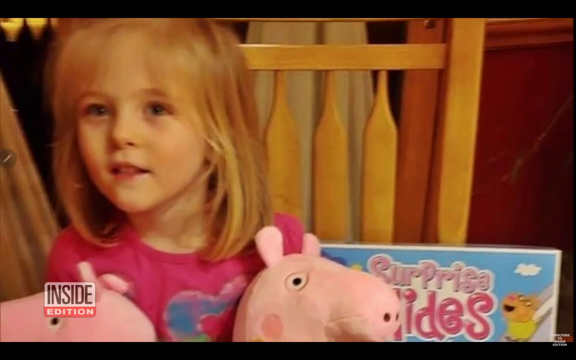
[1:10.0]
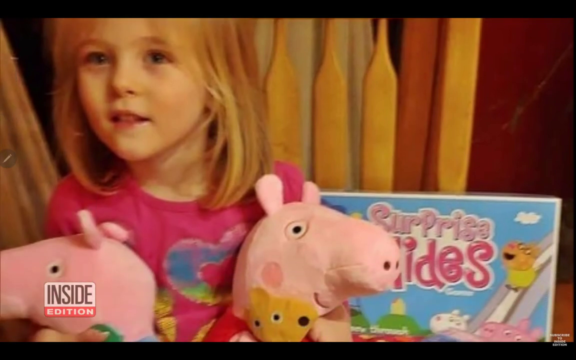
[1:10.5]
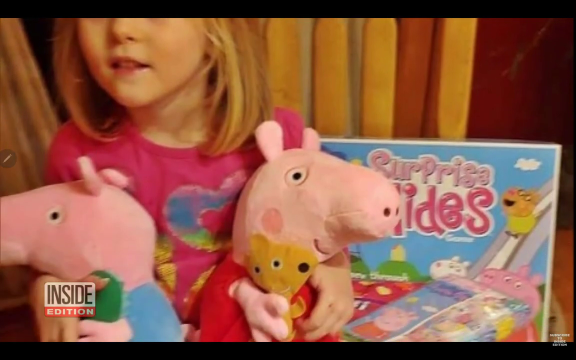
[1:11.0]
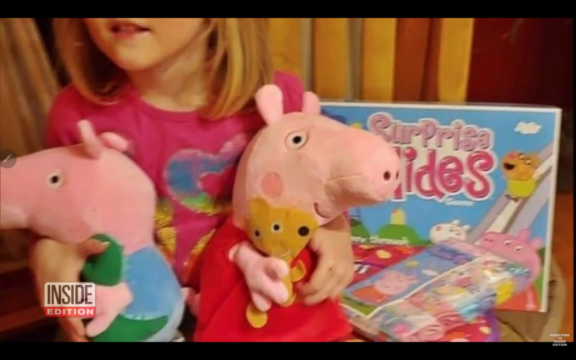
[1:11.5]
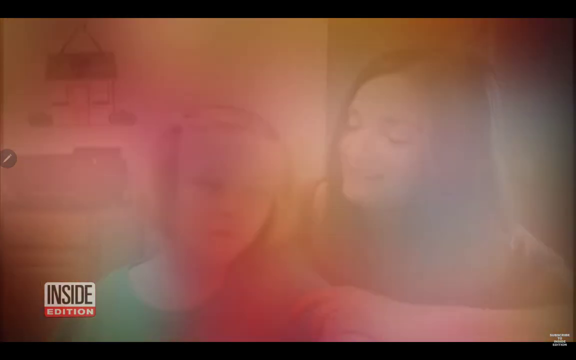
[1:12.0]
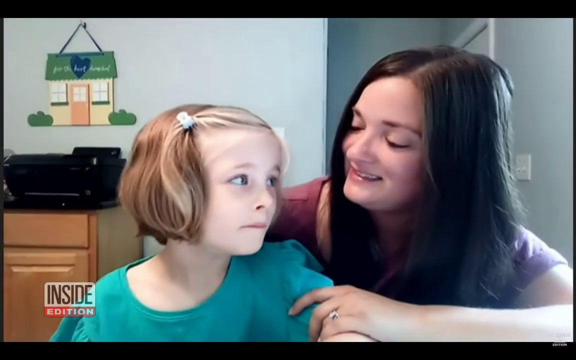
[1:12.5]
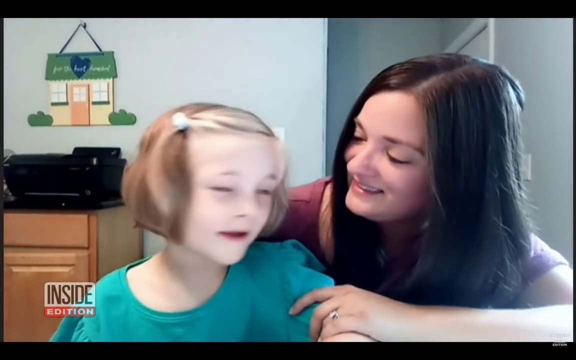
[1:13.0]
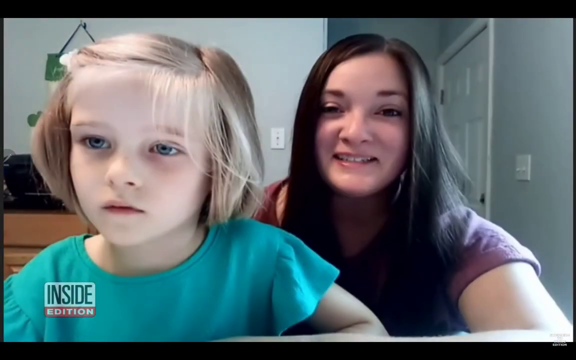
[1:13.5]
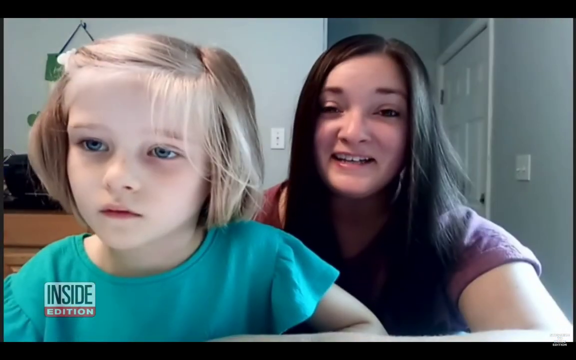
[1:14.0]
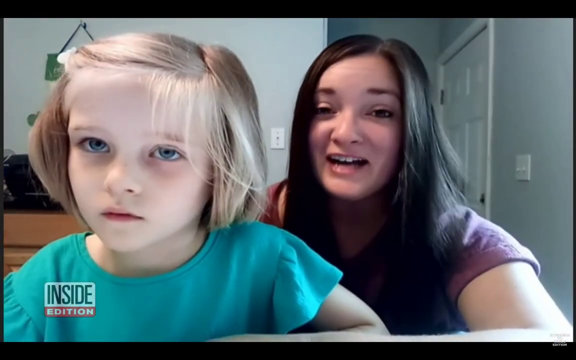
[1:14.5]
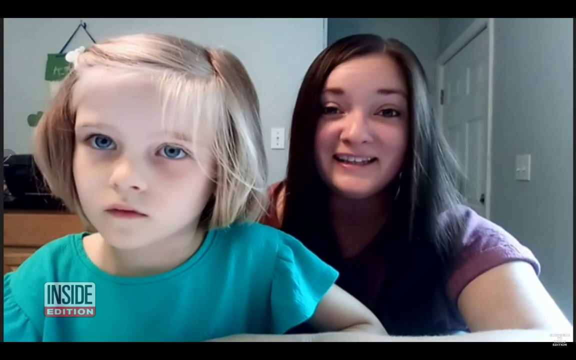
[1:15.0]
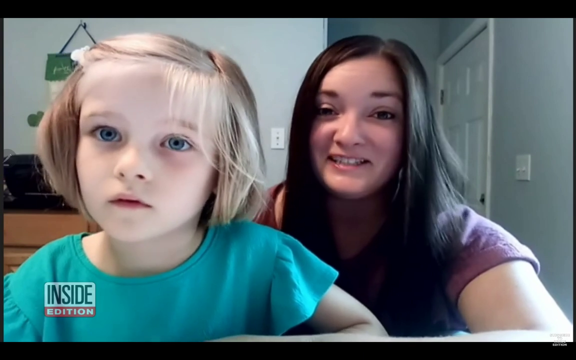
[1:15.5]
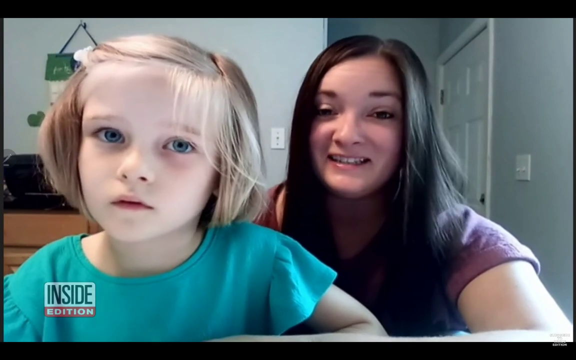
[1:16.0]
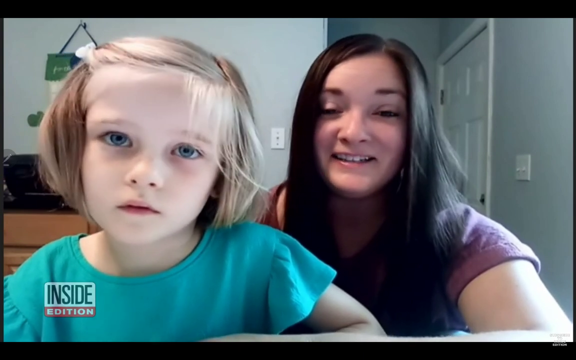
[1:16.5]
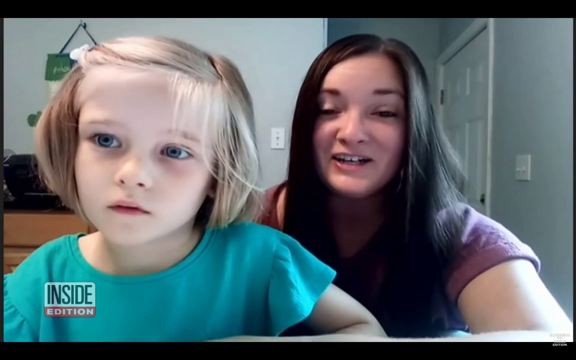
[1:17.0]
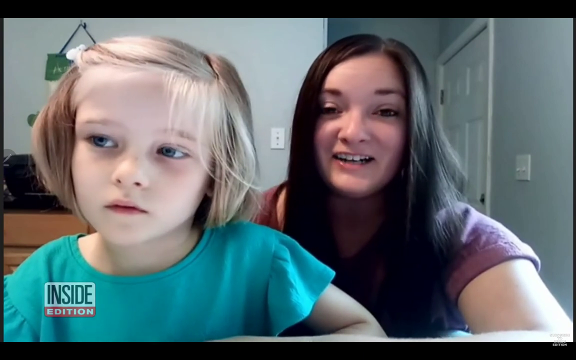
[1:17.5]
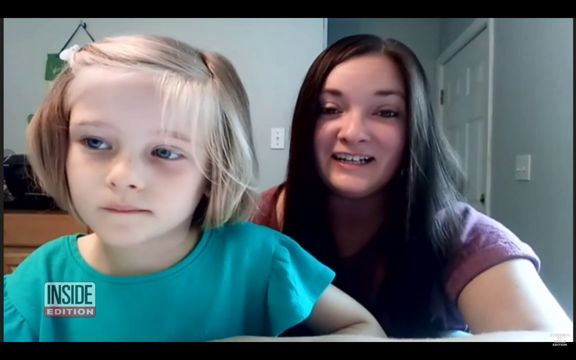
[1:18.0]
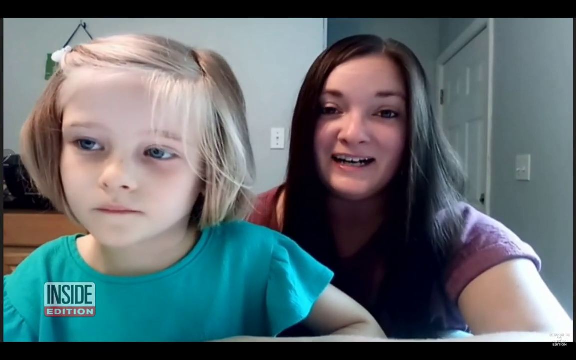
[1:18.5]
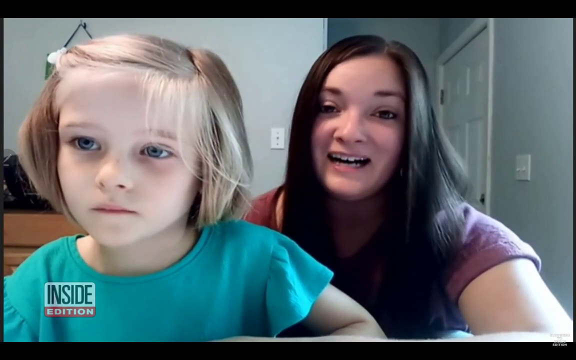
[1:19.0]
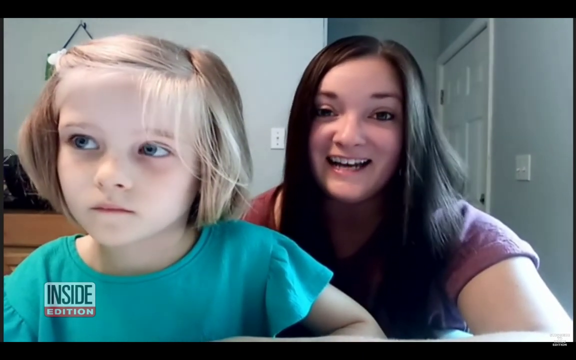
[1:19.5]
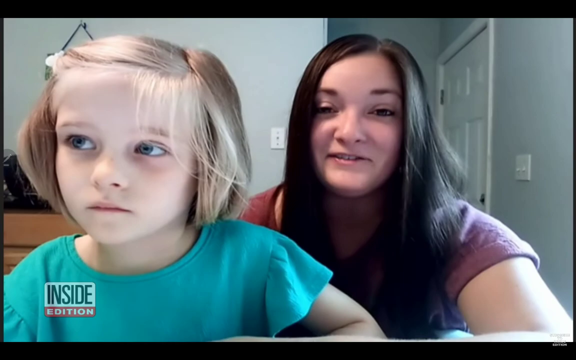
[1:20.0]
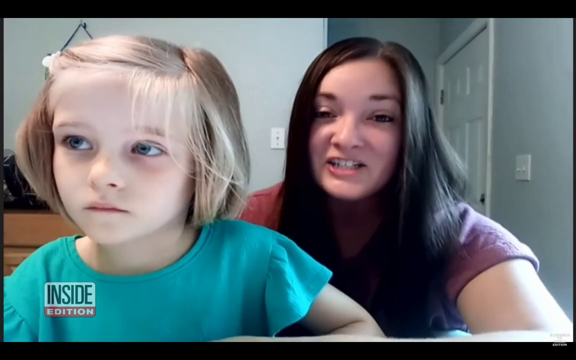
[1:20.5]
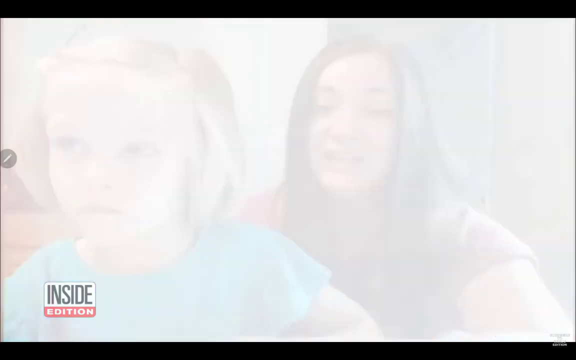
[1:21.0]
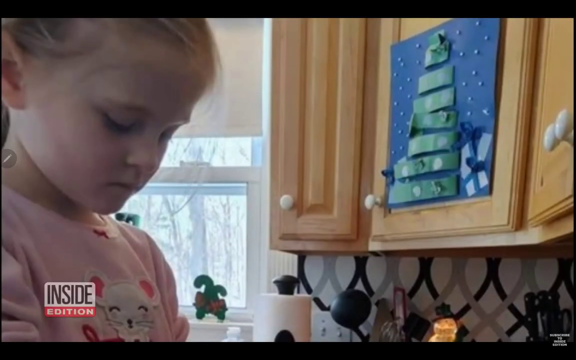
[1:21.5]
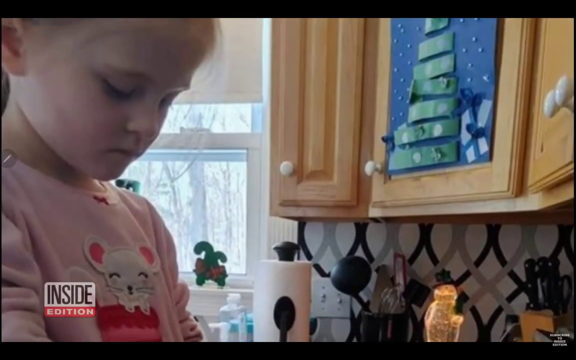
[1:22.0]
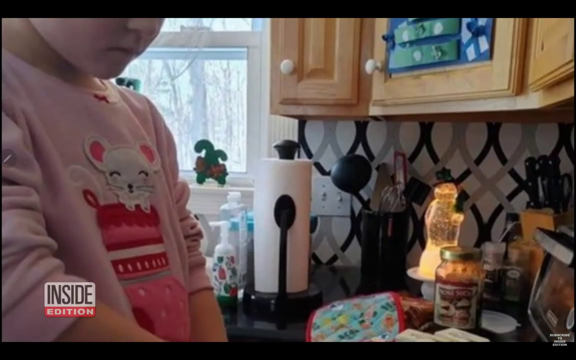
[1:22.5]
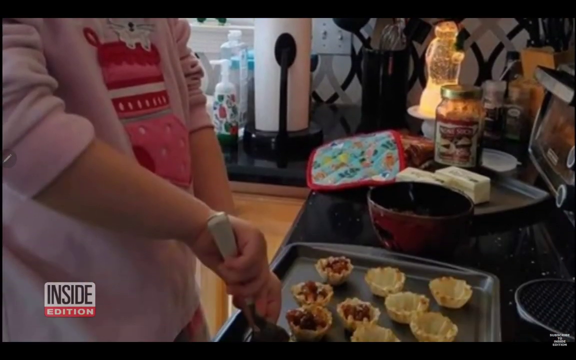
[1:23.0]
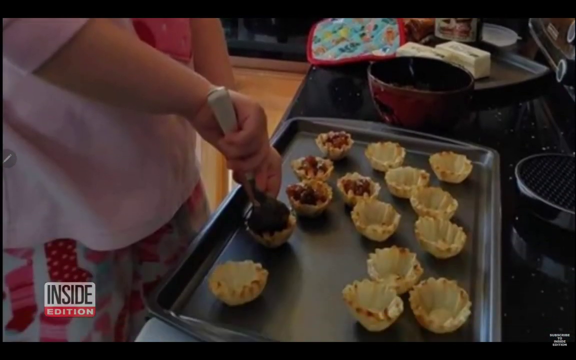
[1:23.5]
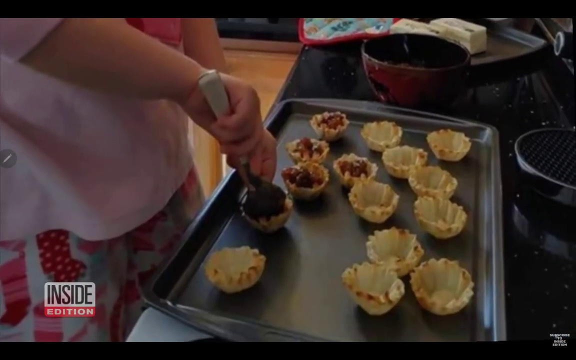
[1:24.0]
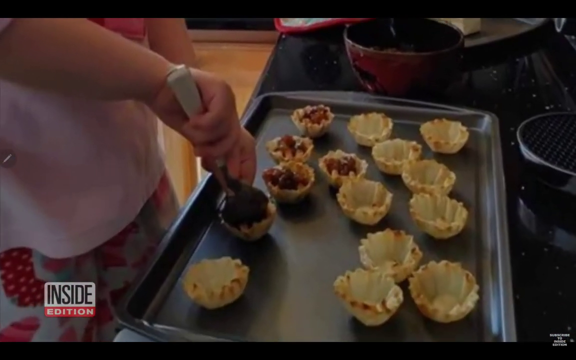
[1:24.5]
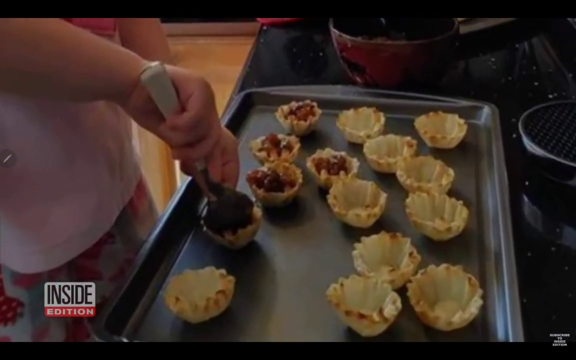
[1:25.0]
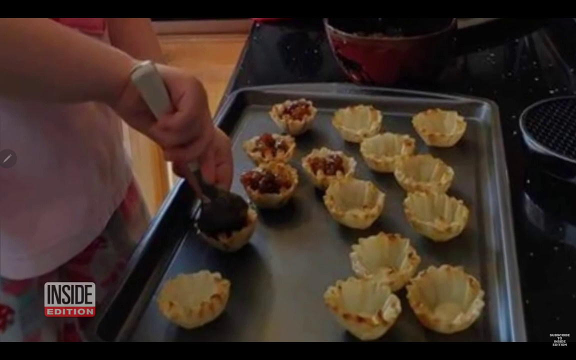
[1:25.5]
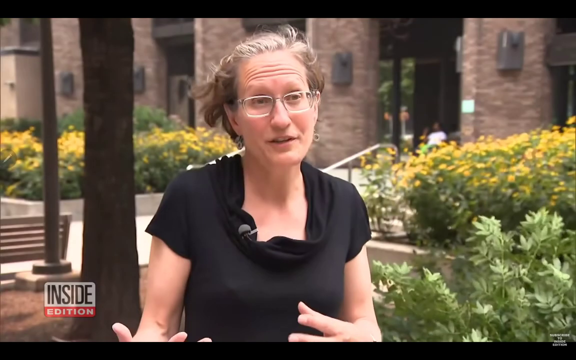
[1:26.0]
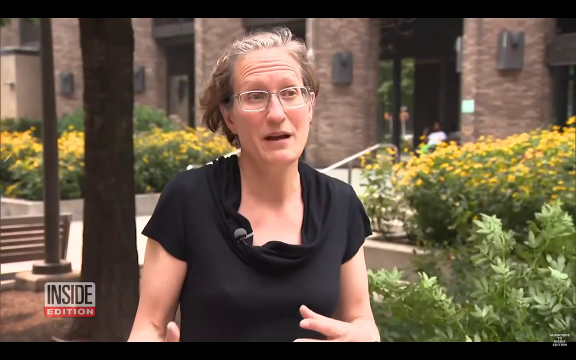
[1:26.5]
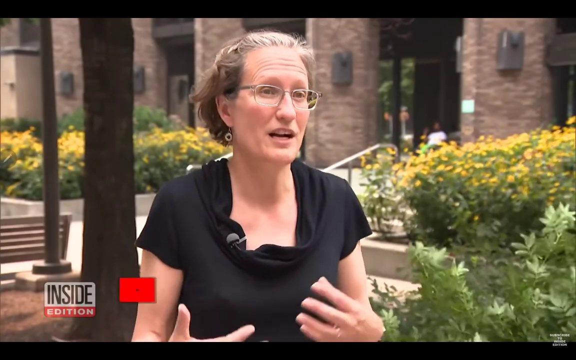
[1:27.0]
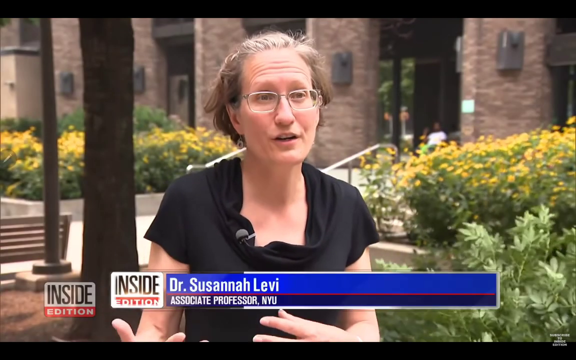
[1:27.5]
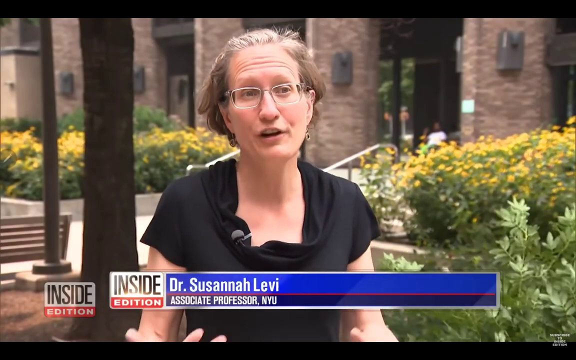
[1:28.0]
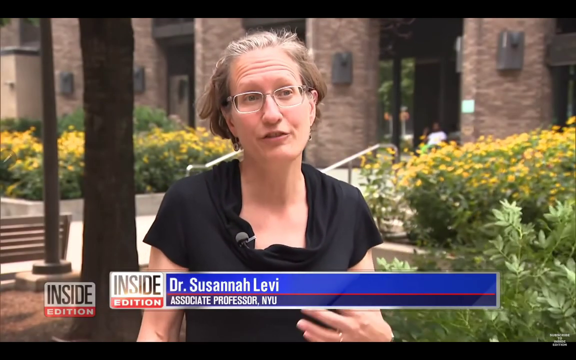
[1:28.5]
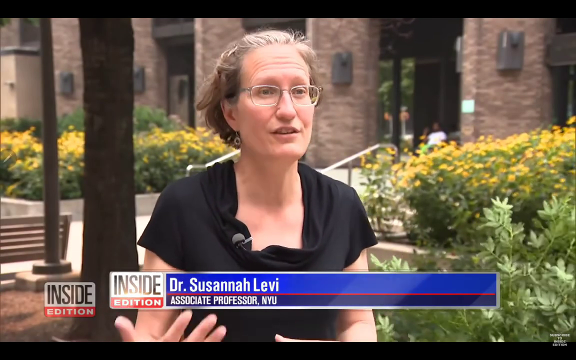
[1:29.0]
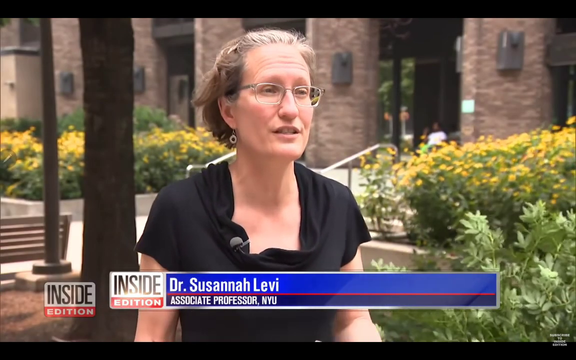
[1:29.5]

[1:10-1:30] A mom sits with her daughter on her lap, apparently inside a bedroom. The daughter is a little blonde girl in a green shirt; the mom has long brown-black hair and wears a short-sleeved purple shirt. The two are shown talking. The daughter then appears in the kitchen in her Peppa Pig clothing, helping her mom make pastries and desserts. Next comes a clip of Dr. Susanna Levy, an associate professor at NYU. The video then returns to the mother and daughter in the room.